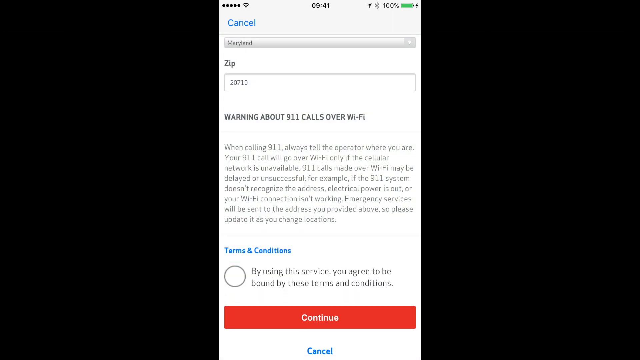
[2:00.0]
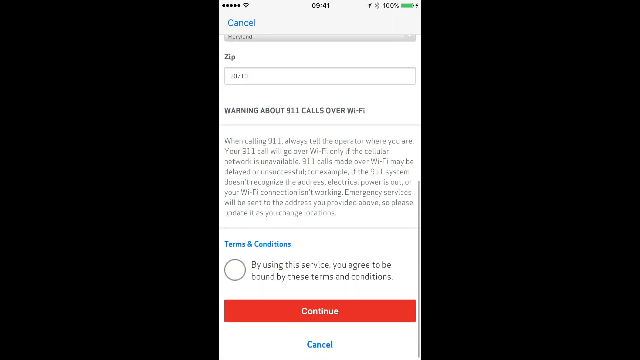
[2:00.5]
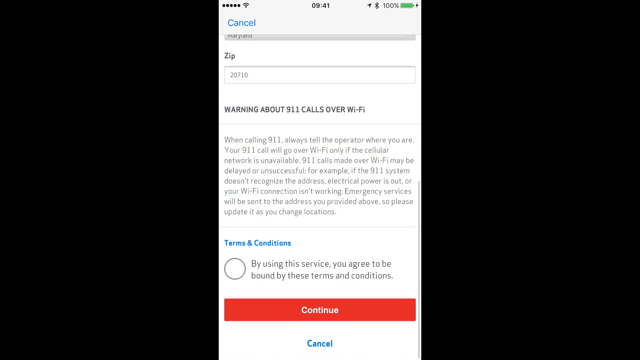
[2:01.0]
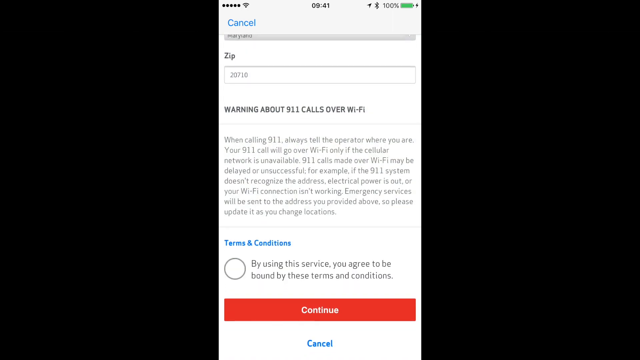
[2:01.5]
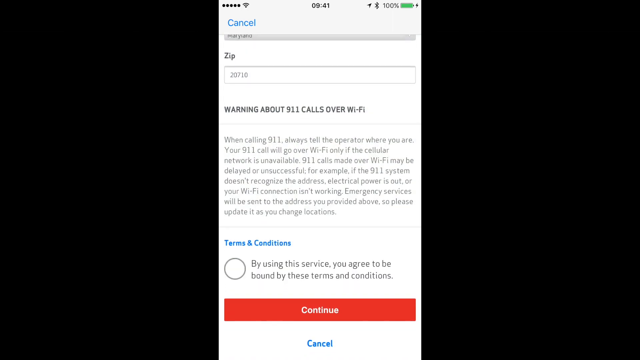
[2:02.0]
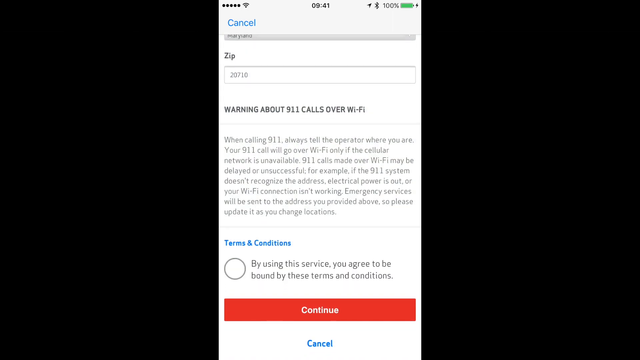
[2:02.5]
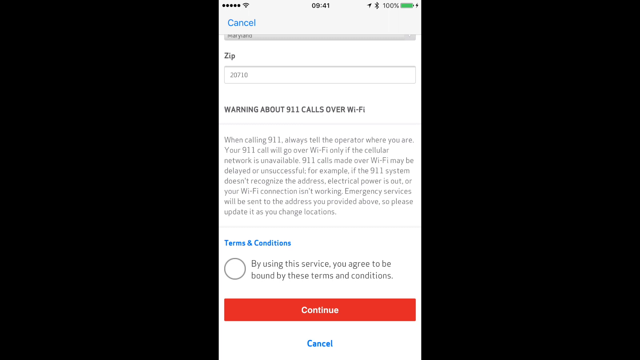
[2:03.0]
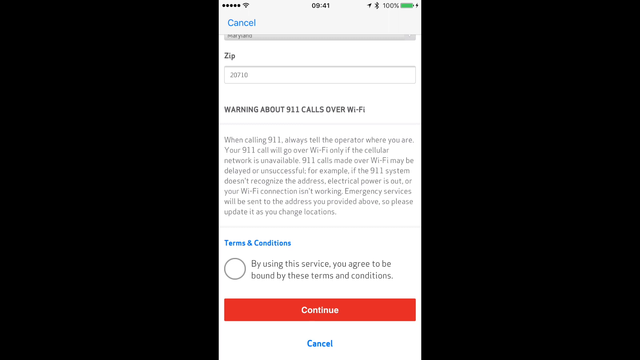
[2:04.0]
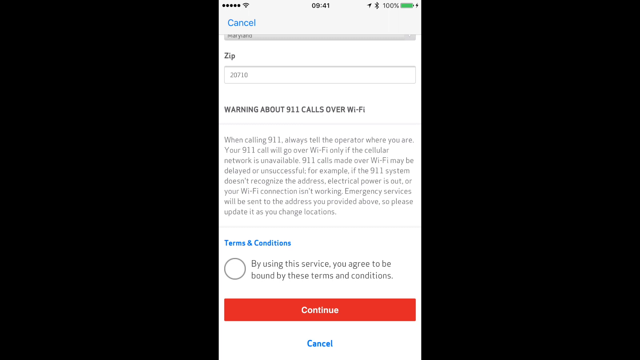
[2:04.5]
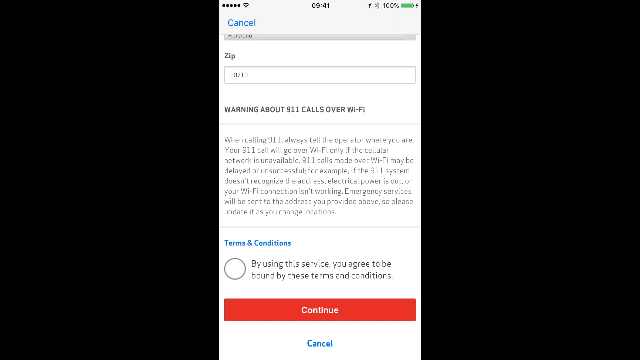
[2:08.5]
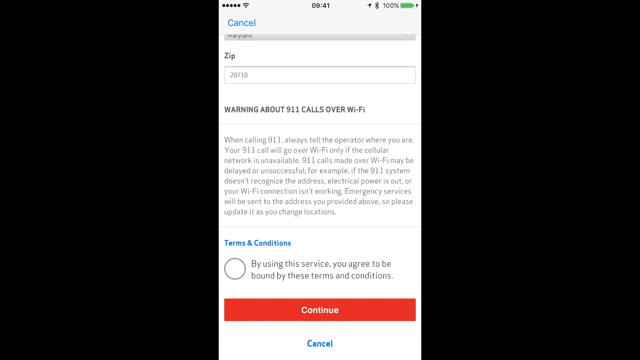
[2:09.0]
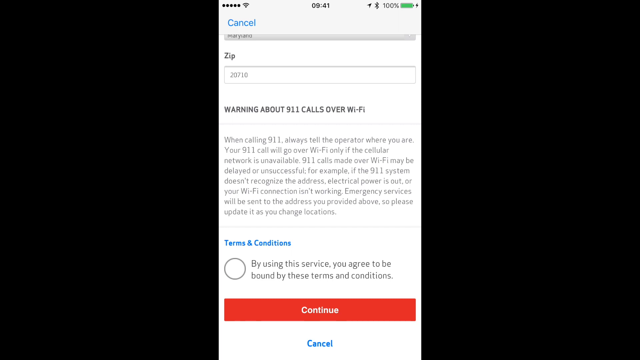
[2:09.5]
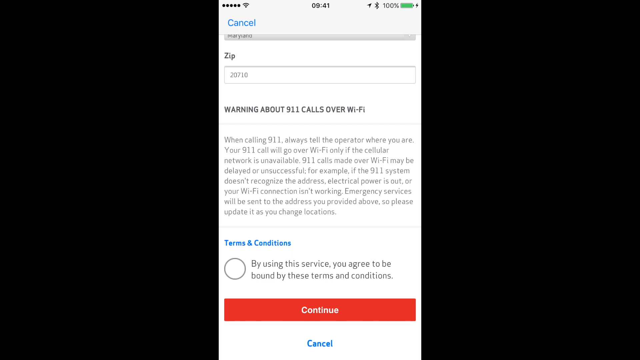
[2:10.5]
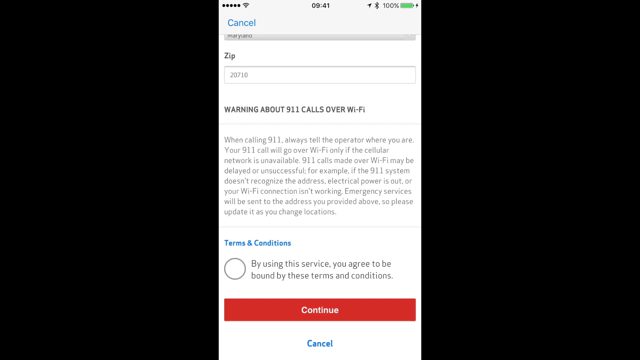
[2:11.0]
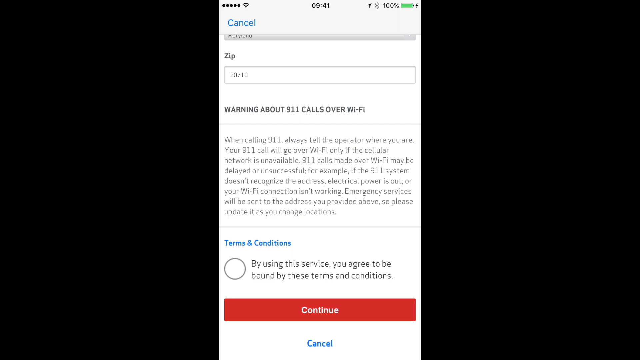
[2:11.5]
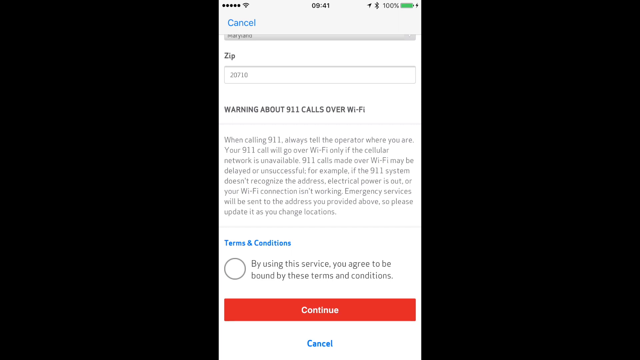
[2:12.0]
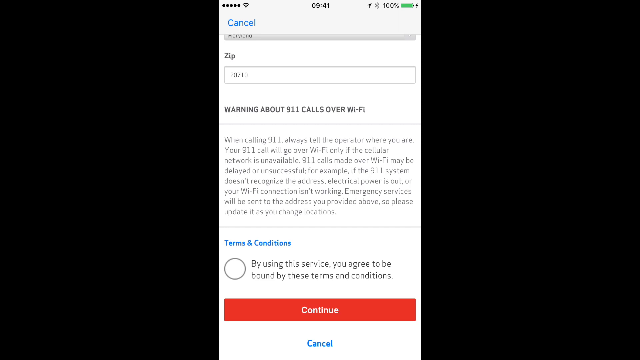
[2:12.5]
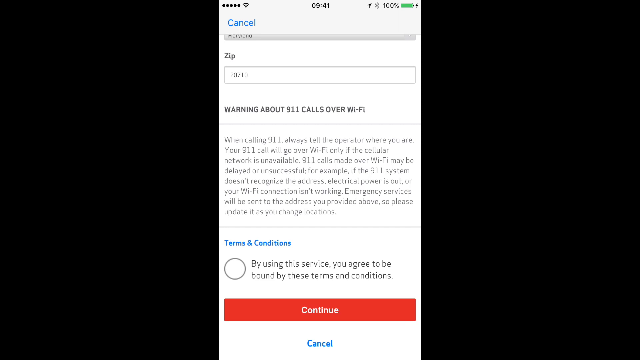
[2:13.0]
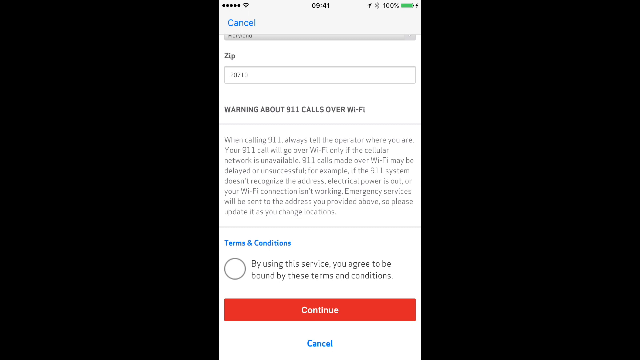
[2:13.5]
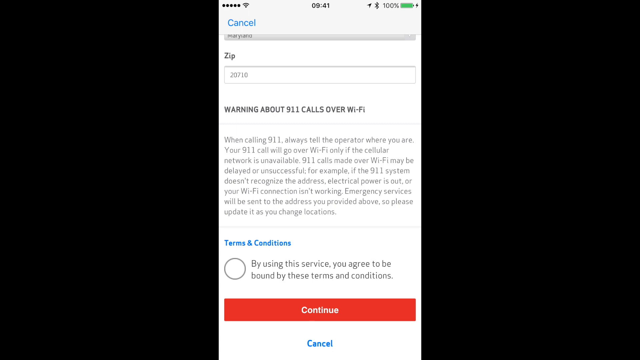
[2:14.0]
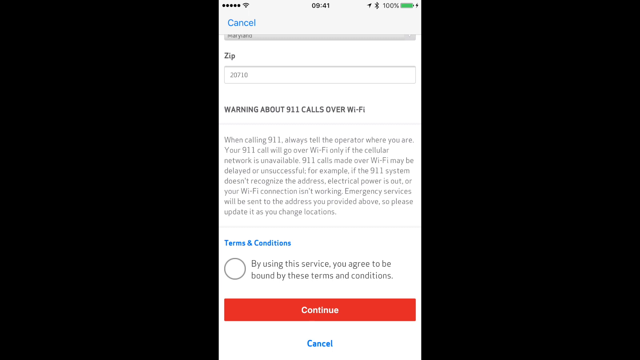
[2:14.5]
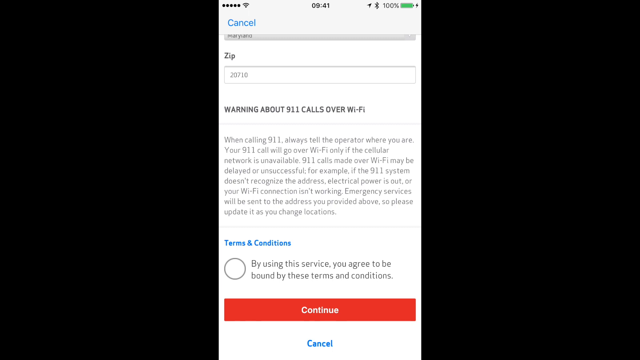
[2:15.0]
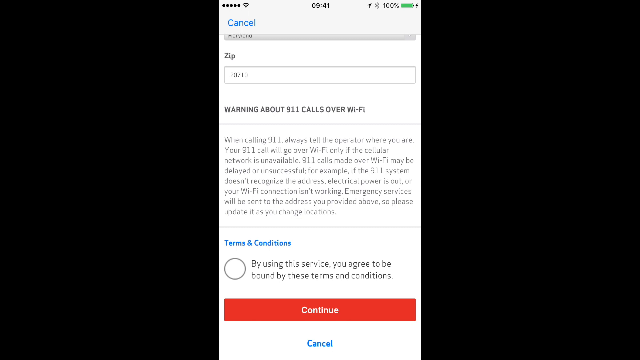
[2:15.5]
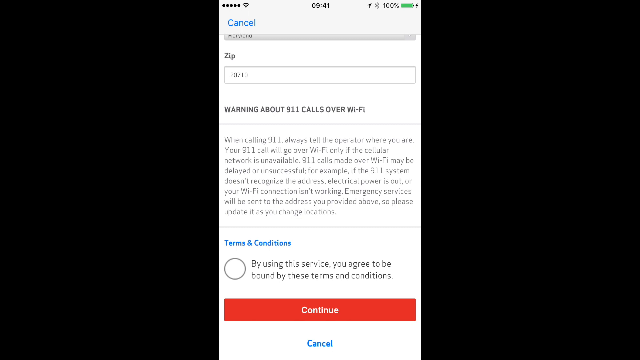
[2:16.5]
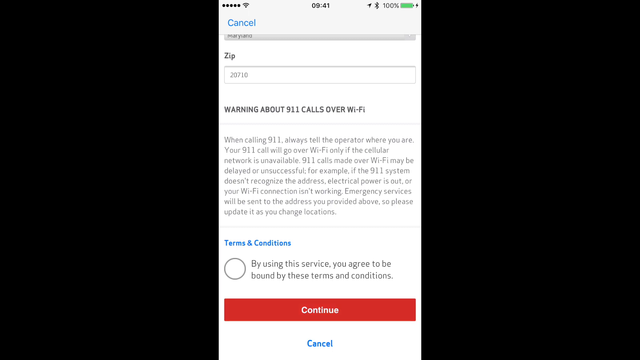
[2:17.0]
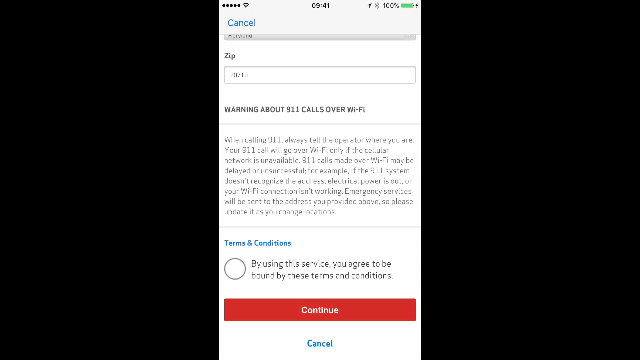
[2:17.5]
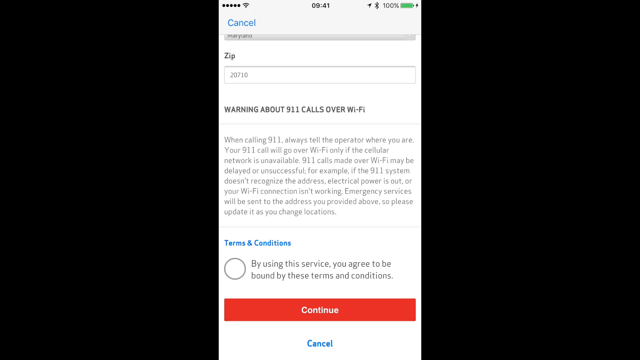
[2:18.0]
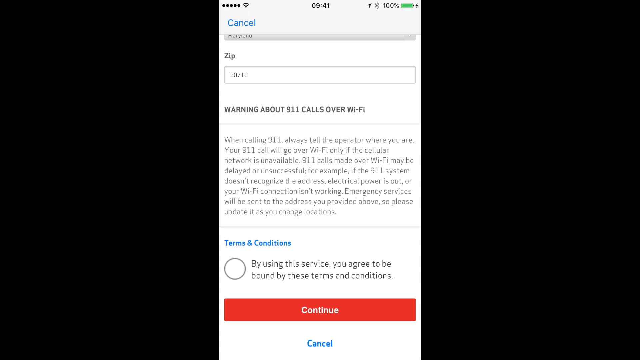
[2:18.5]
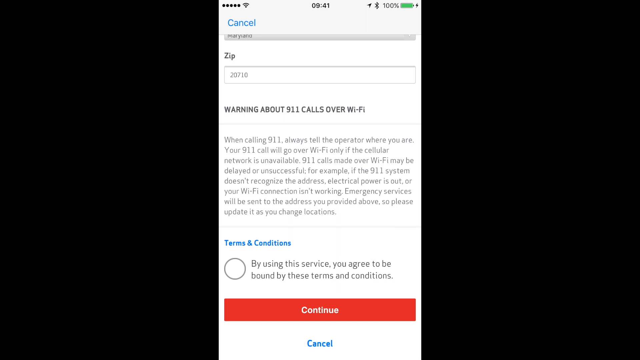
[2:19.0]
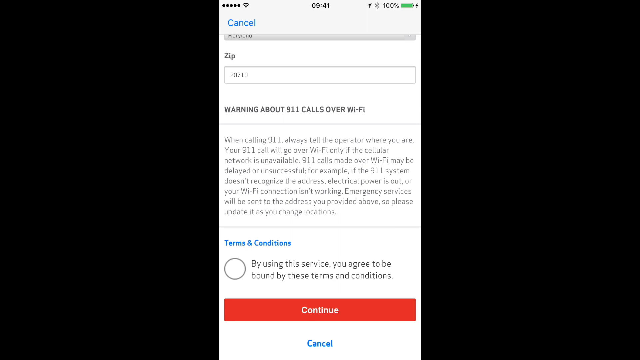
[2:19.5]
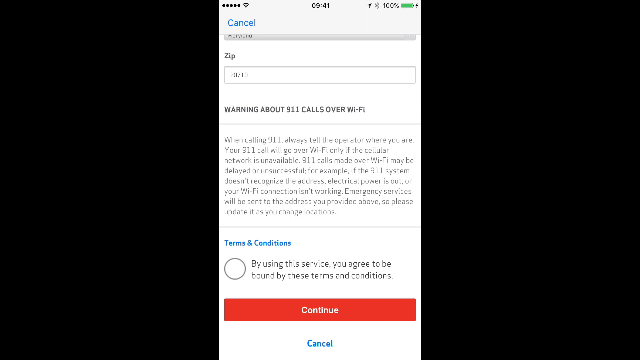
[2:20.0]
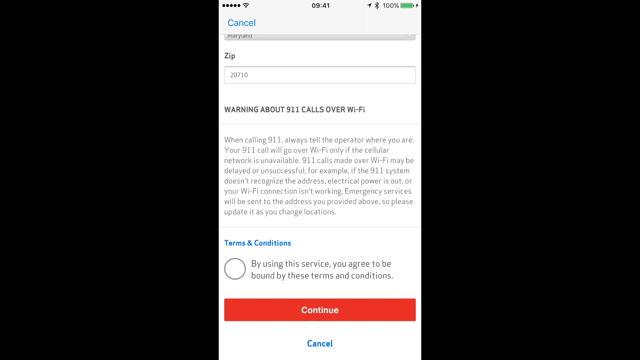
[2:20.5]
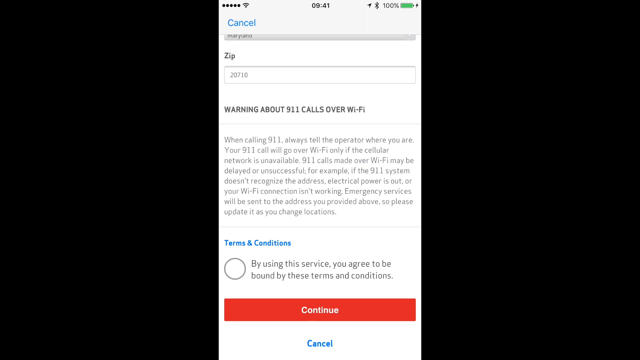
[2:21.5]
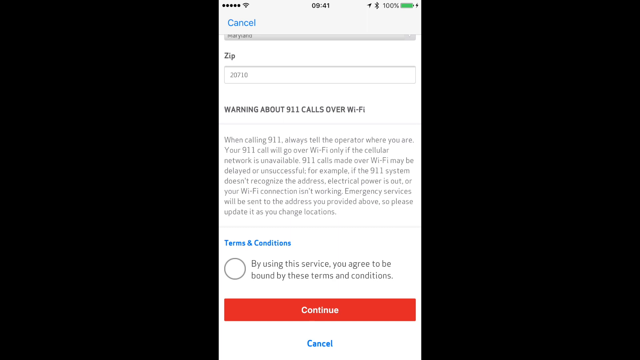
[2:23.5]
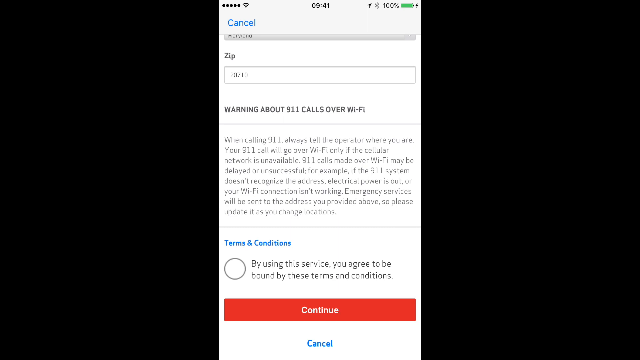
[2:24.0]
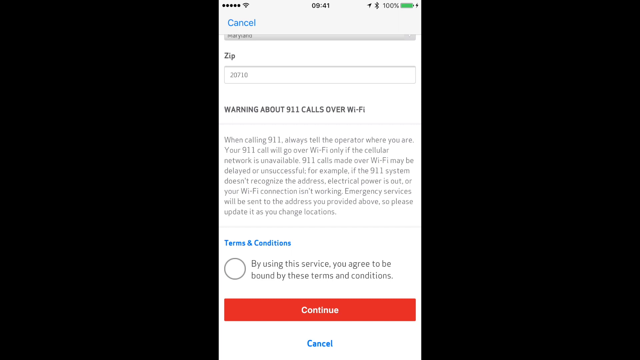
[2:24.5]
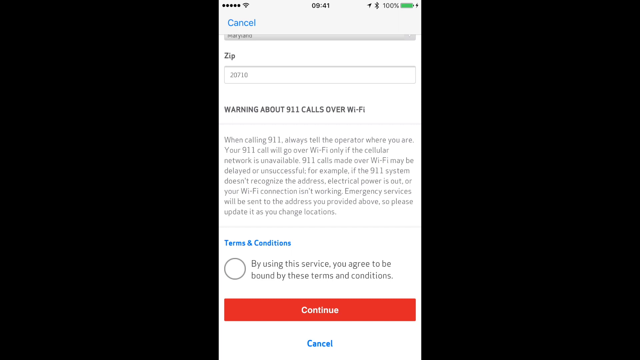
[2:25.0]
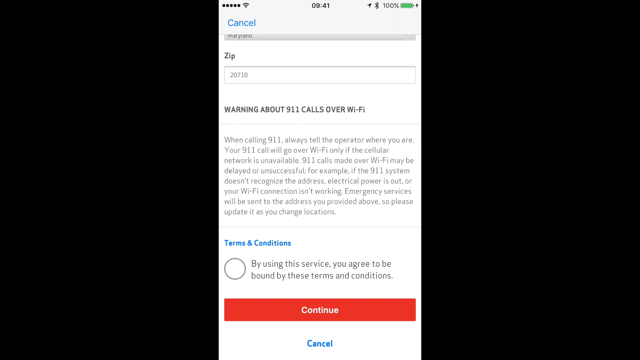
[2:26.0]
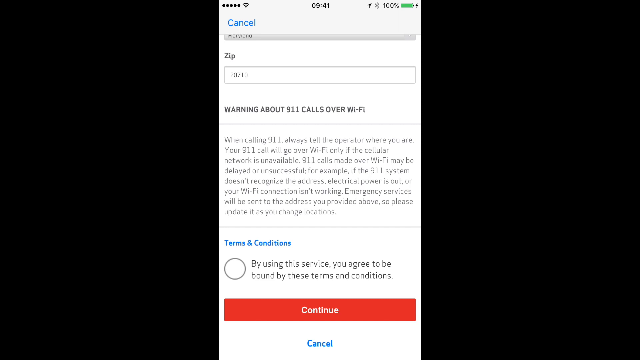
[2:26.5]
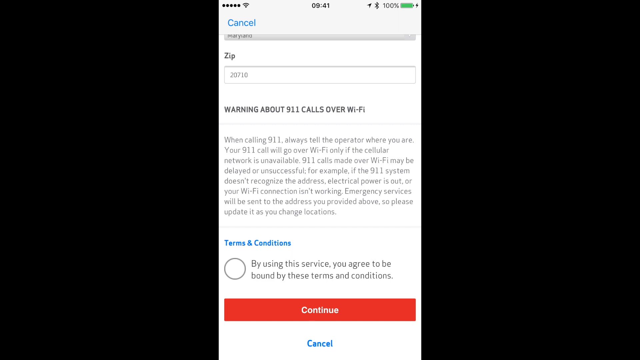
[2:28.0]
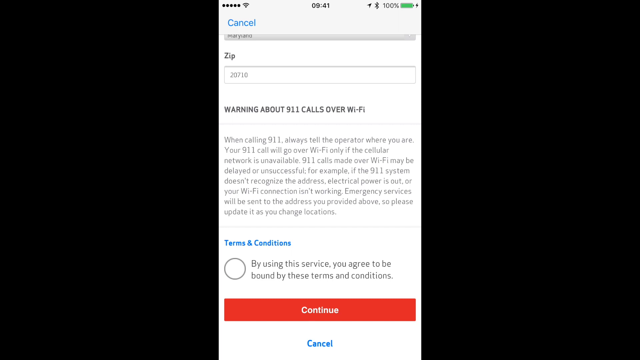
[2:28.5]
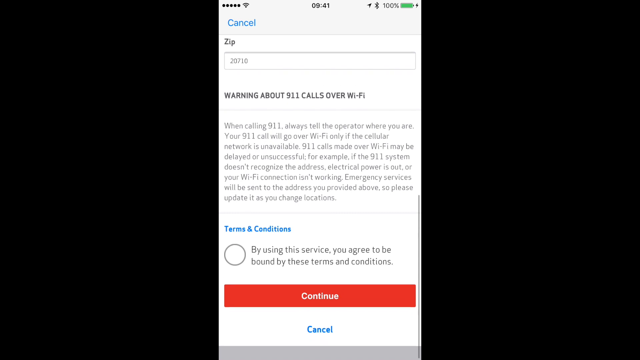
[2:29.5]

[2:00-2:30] The mobile device's screen is in the very center of the all-black background. The blue cancel button is in the upper left corner, and right underneath is a dropdown box with the state of Maryland entered, followed by a zip code section with a box containing the zip code 20710. Right under that is a bold black title that says "warning about 911 calls over wifi", followed by the warning information. Below is a terms and conditions section with a circular agreement box that must be ticked to continue, and under it a red rectangular continue button with a blue cancel option beneath it. The screen stays focused on this area for several seconds.